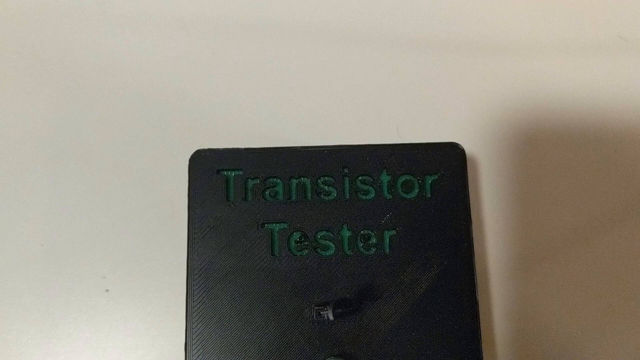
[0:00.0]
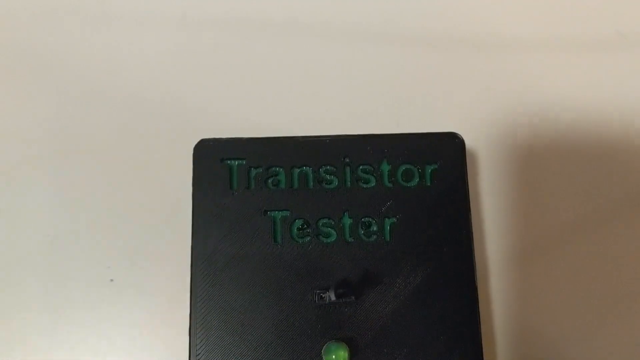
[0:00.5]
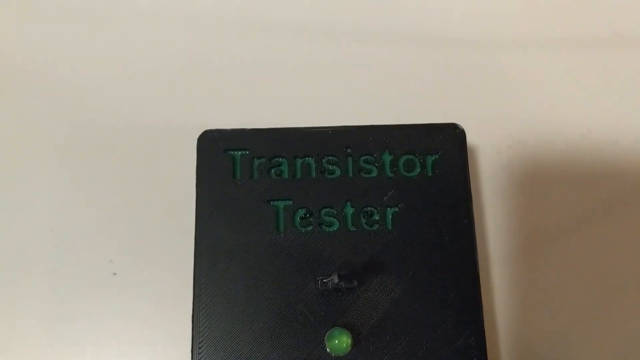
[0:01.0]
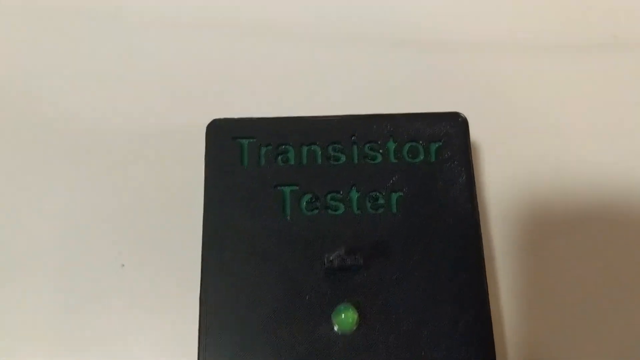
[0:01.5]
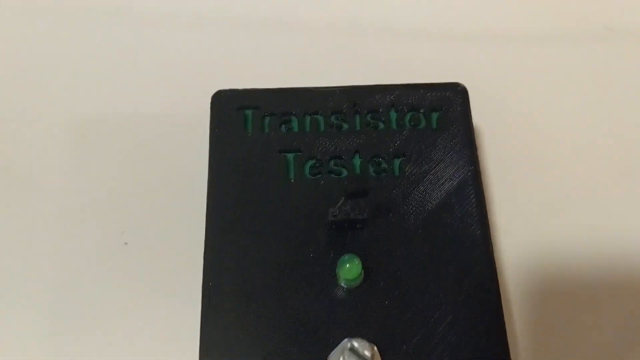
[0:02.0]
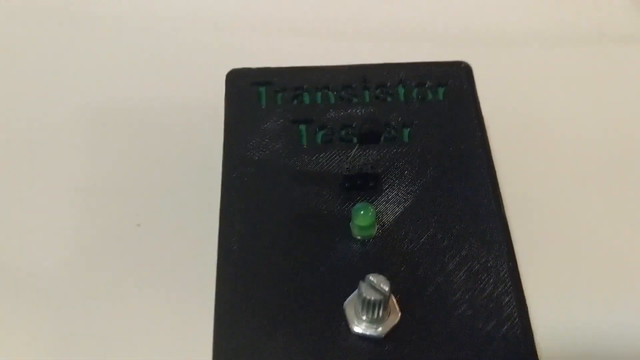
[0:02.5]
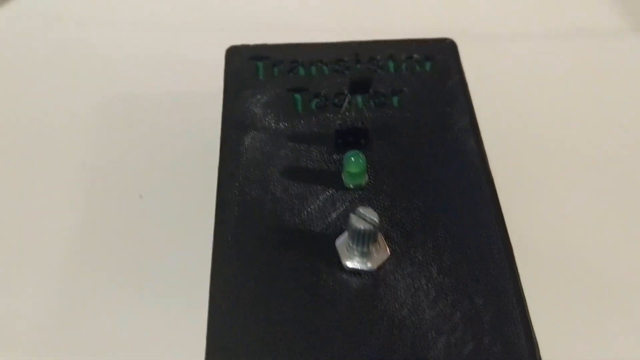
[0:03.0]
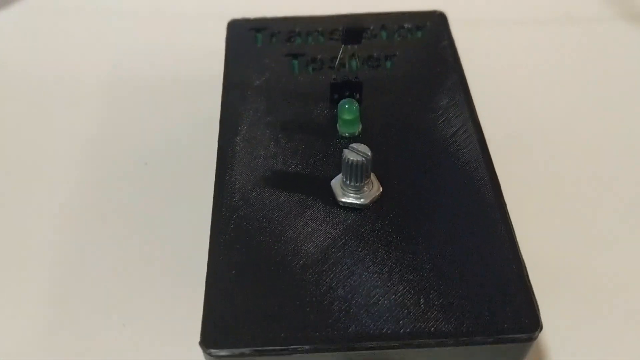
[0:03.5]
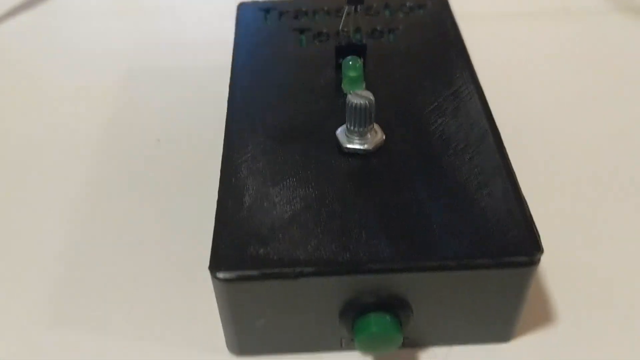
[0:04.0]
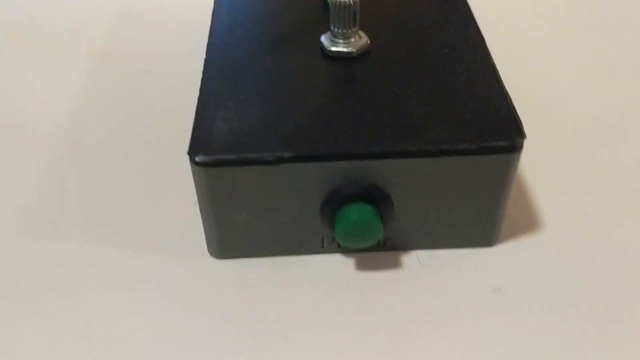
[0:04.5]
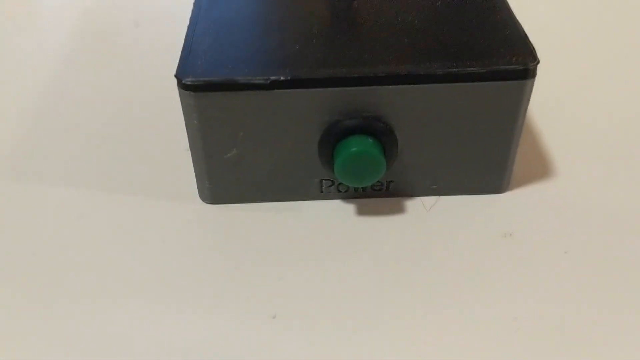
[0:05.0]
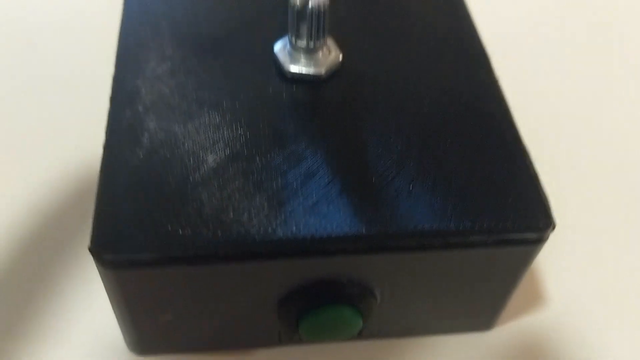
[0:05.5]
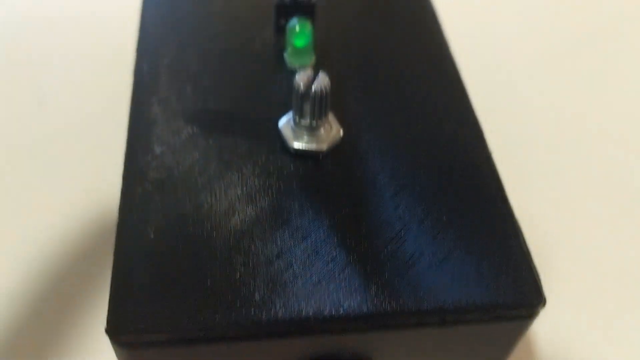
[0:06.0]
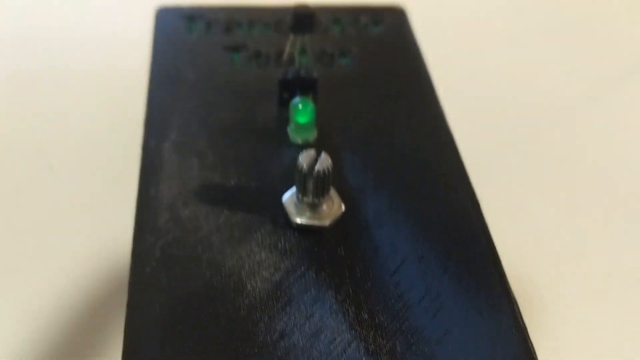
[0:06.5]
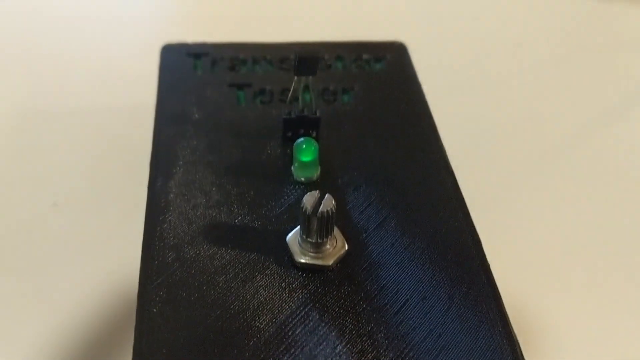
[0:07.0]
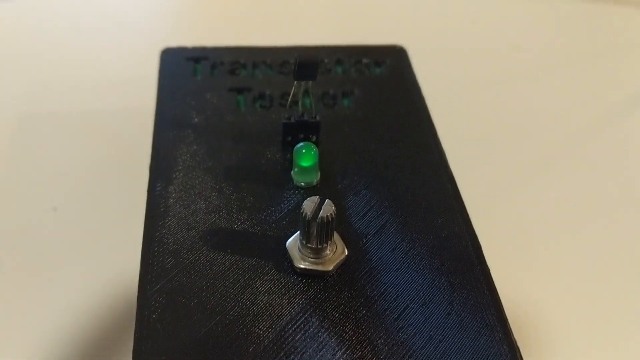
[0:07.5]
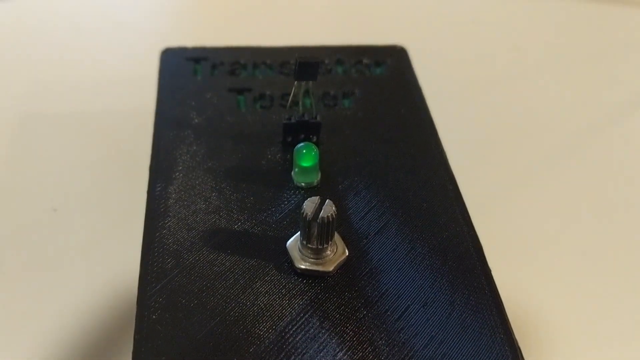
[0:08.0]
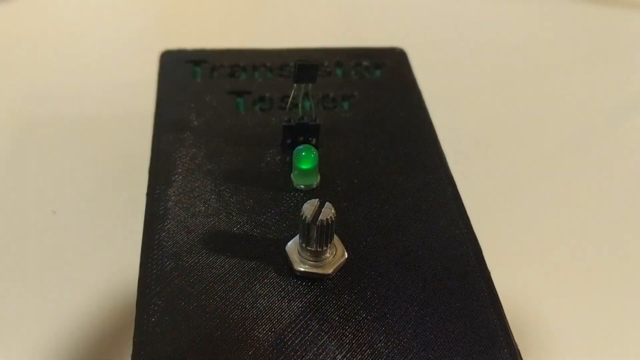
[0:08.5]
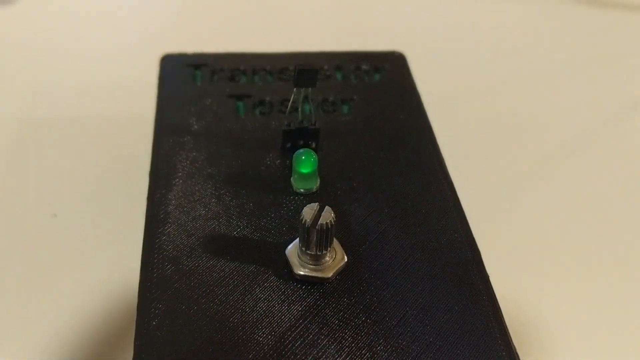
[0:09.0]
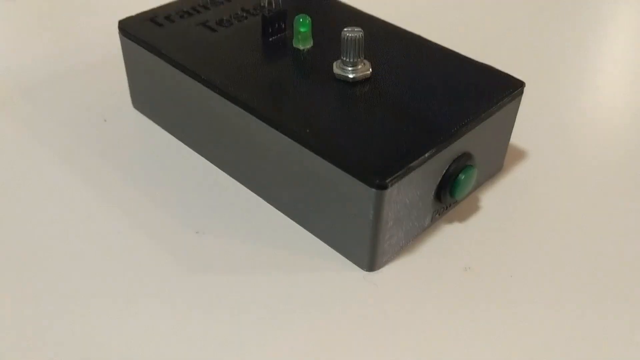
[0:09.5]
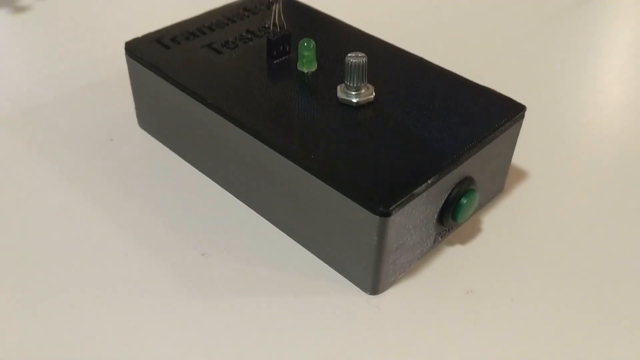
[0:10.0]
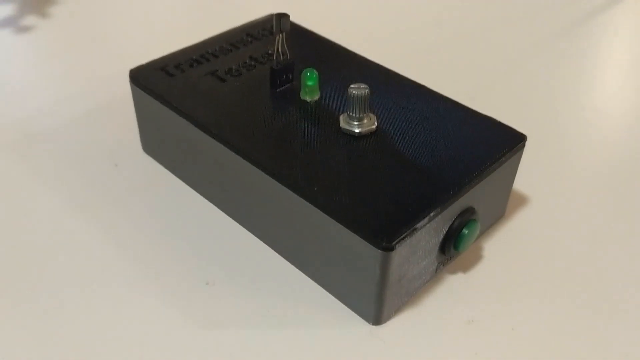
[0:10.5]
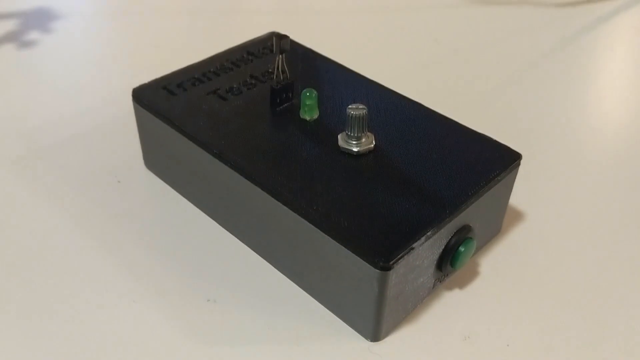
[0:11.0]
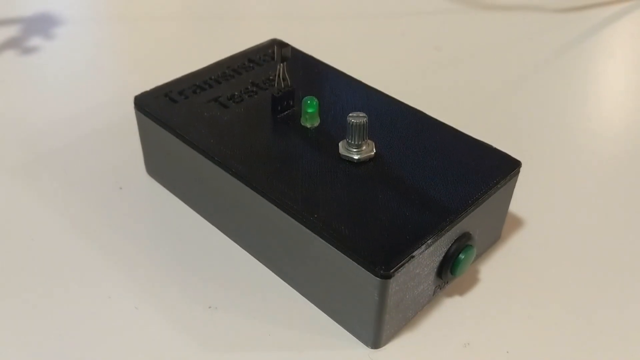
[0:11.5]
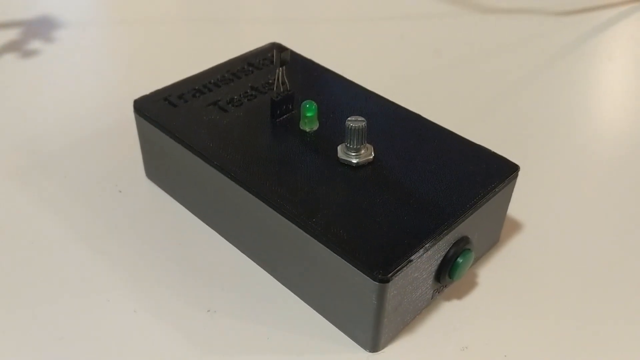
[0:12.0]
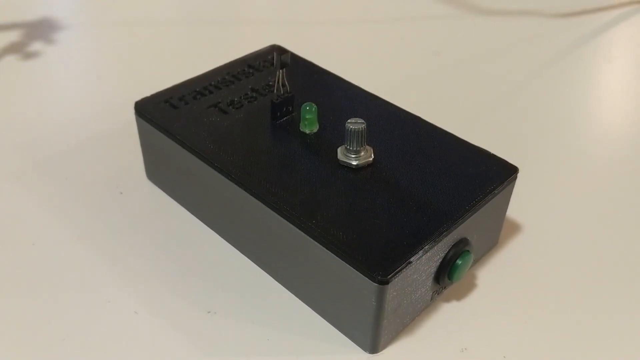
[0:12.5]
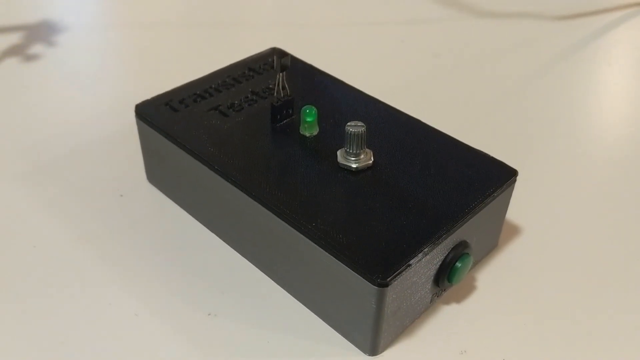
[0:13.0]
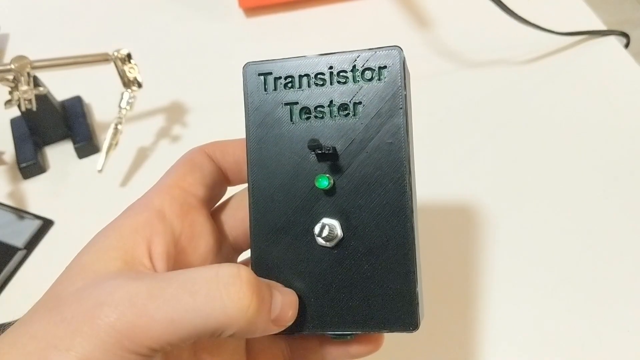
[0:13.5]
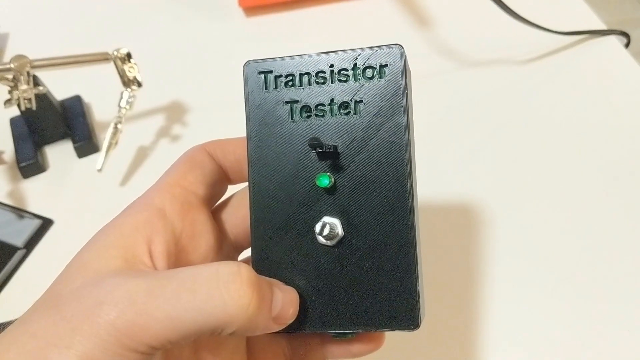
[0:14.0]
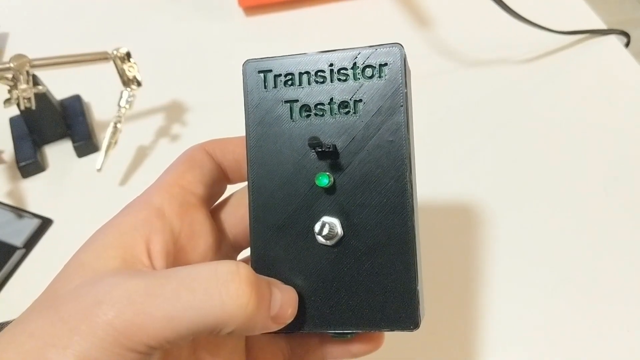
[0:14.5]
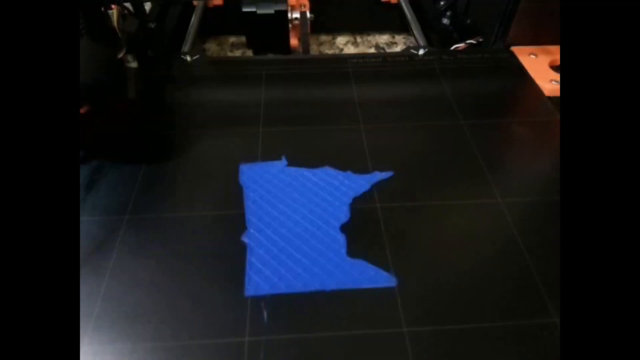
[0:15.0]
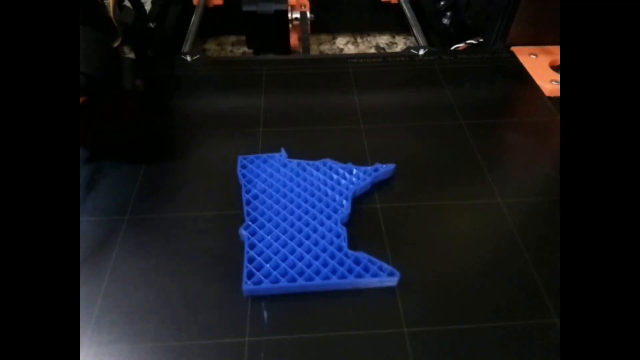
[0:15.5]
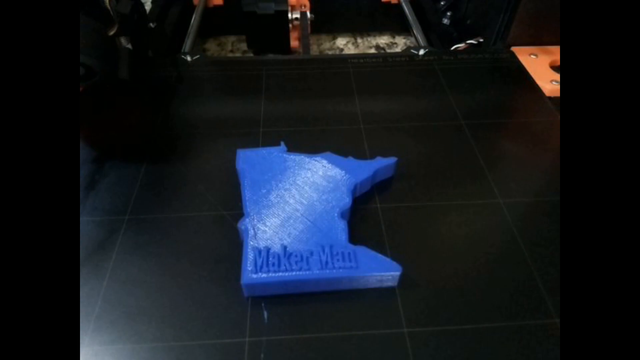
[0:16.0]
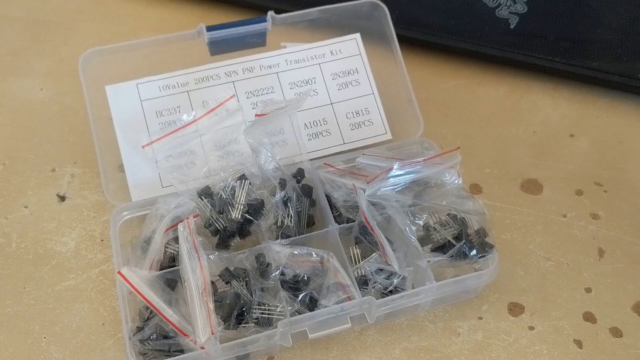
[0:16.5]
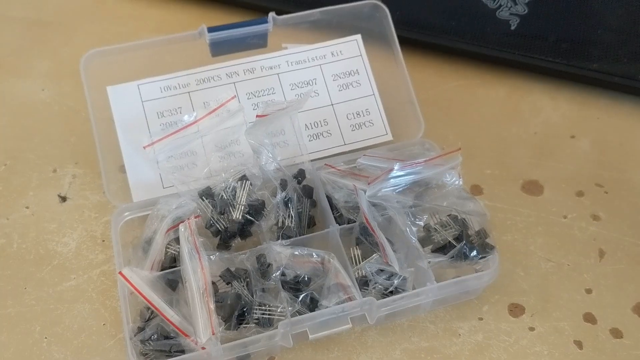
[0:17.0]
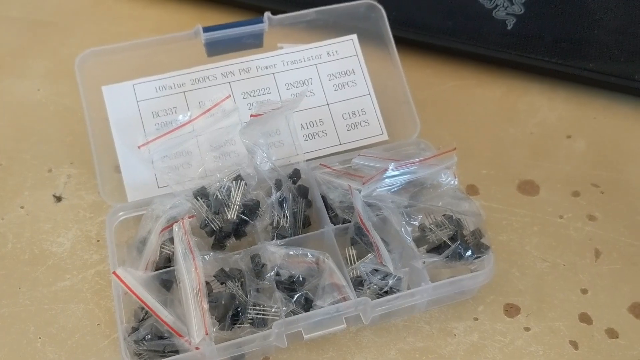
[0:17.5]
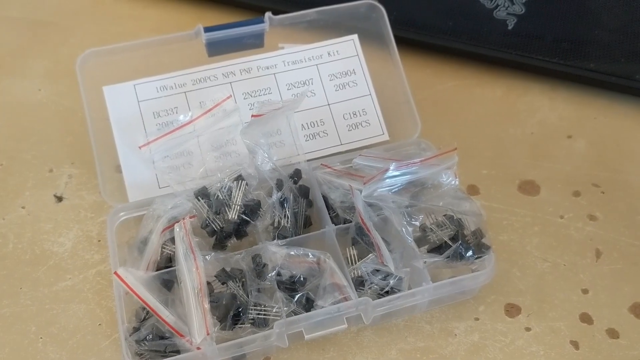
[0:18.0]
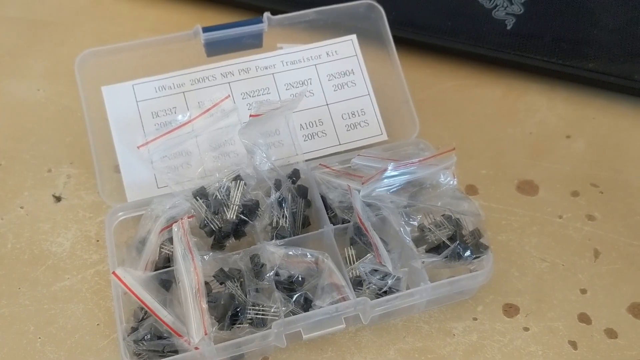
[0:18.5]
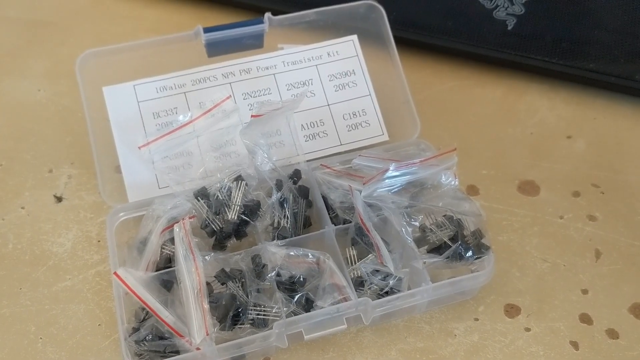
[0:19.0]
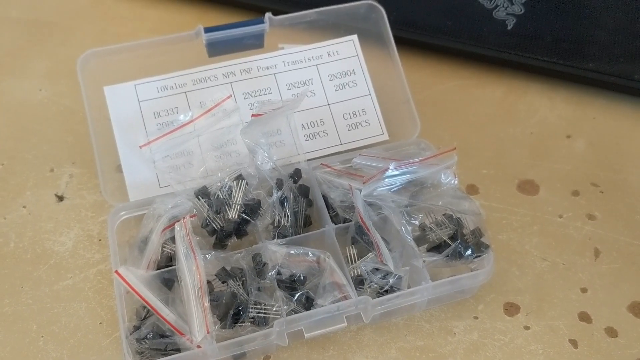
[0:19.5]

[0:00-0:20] A box of sorts displays the words "transistor tester." The tester has a green button on the bottom, a green light on the top, and an area with what looks like a screw at the top as well. The view then moves to a container holding many different components. As the person films, a gray shadow falls toward the bottom of the frame, and in the upper left corner there is something almost like a puzzle piece. A person's hand picks up the transistor tester, and the green light on the top is now clearly visible. In the back, the source of some of the shadows can be seen: what appears to be a device holding something that looks like metal. An electrical cord is also in the background. The person holding the tester has a Caucasian skin tone.